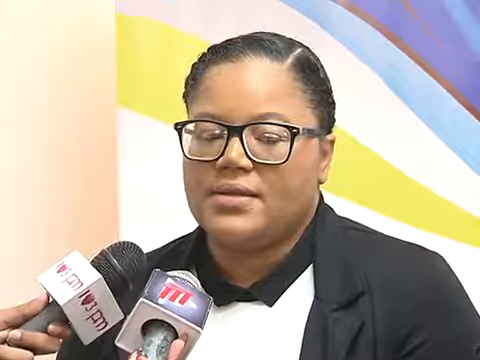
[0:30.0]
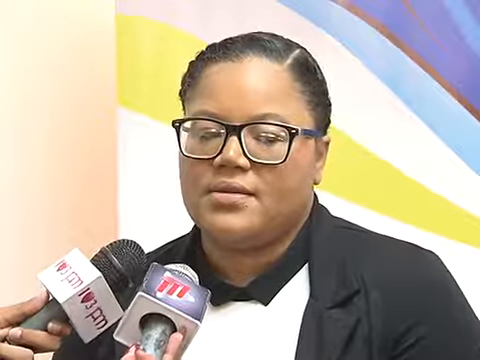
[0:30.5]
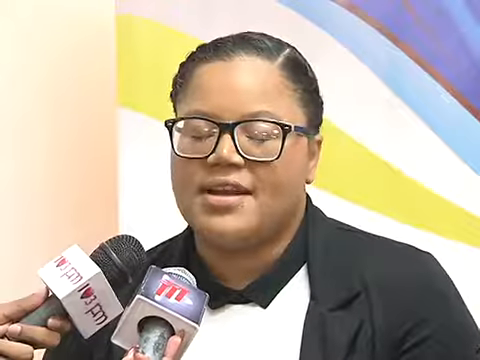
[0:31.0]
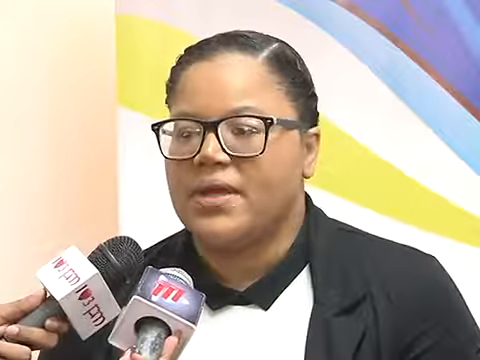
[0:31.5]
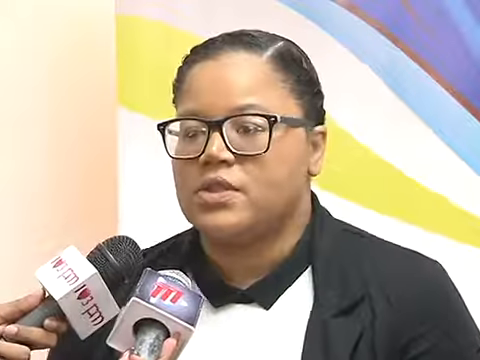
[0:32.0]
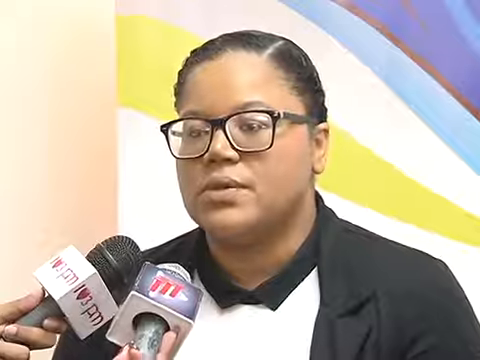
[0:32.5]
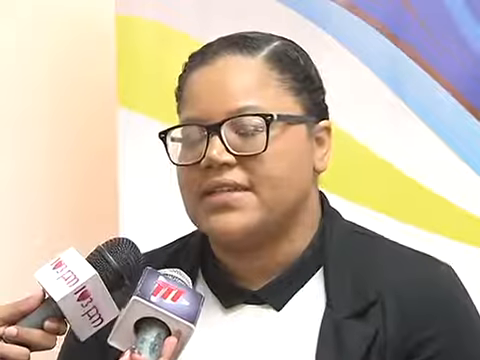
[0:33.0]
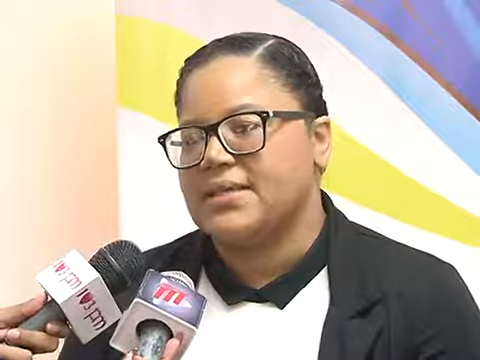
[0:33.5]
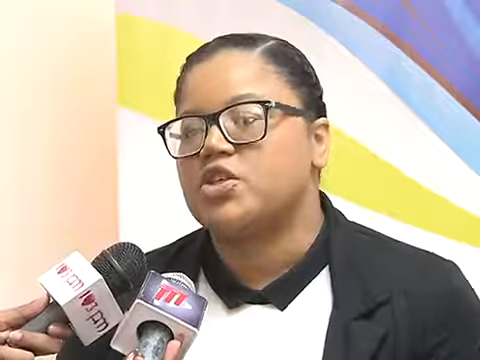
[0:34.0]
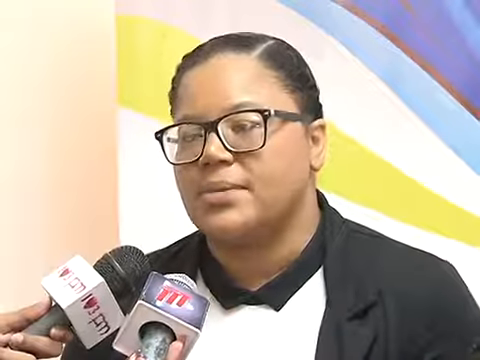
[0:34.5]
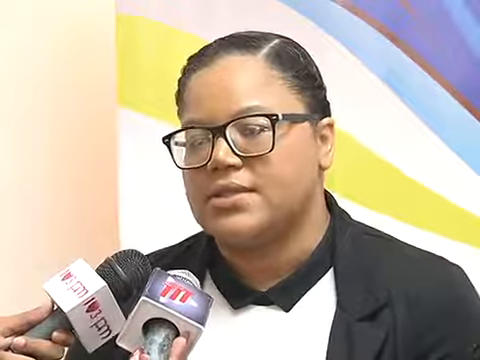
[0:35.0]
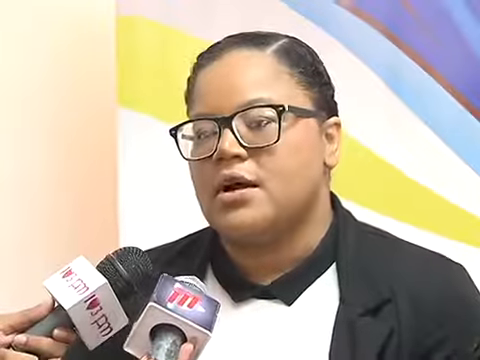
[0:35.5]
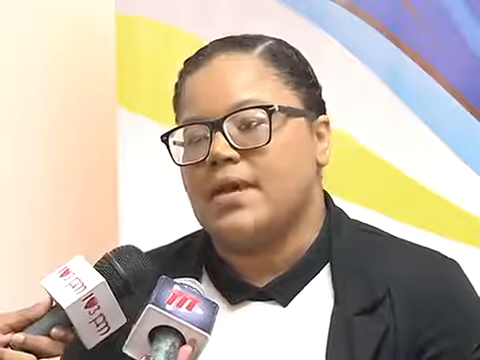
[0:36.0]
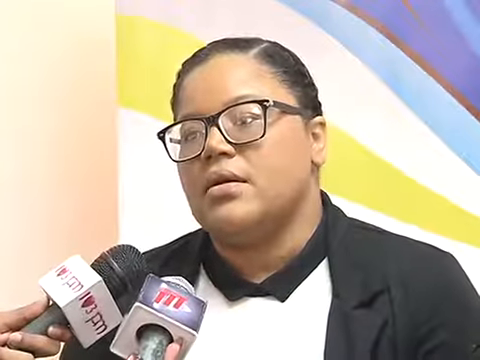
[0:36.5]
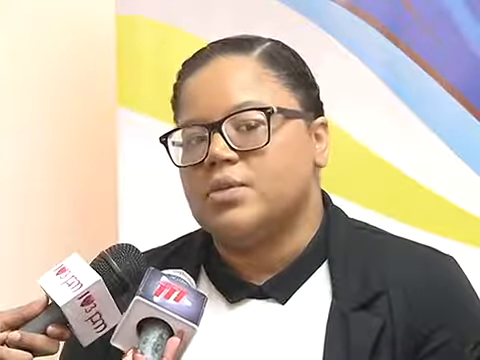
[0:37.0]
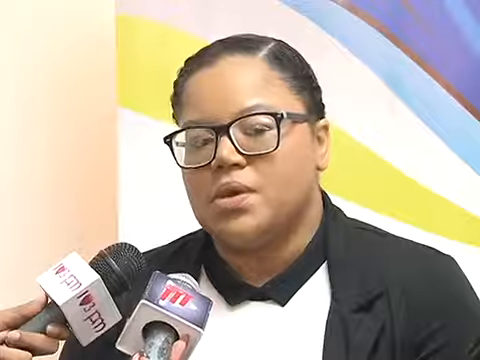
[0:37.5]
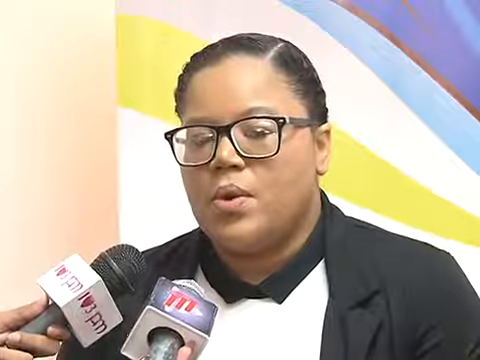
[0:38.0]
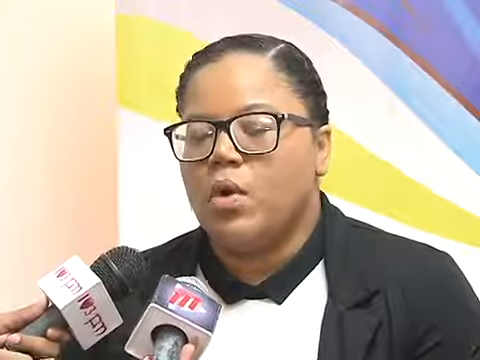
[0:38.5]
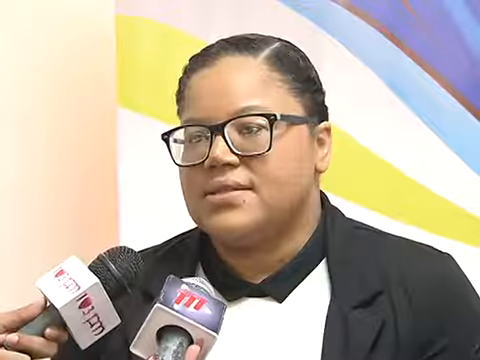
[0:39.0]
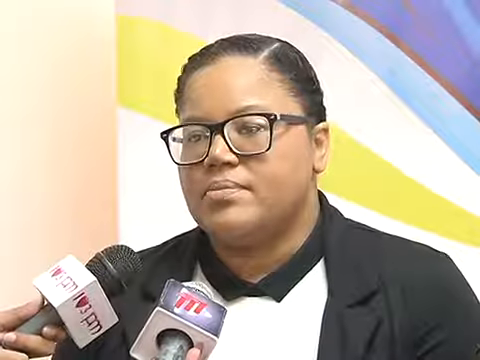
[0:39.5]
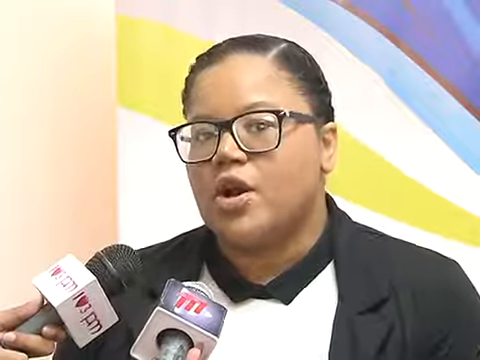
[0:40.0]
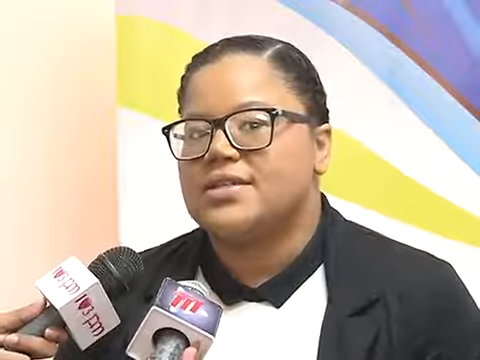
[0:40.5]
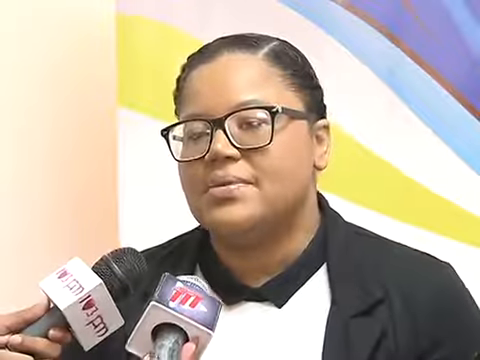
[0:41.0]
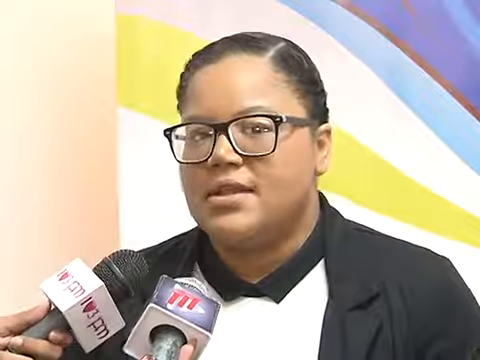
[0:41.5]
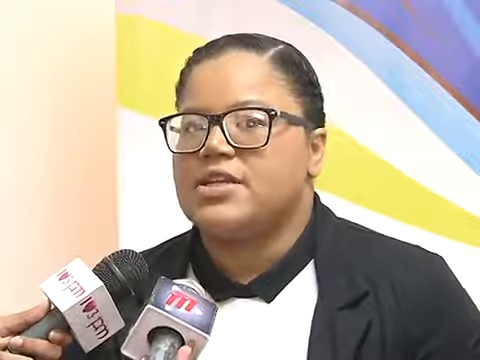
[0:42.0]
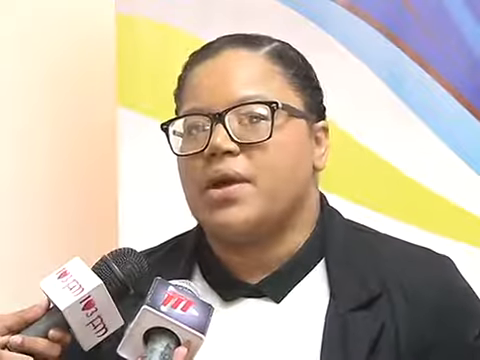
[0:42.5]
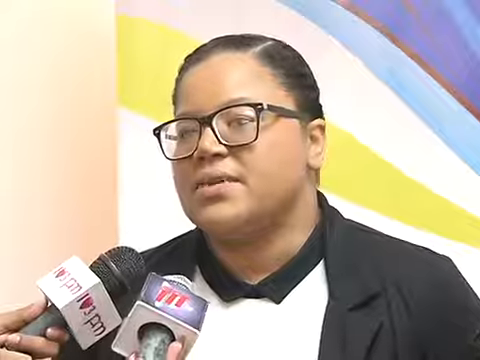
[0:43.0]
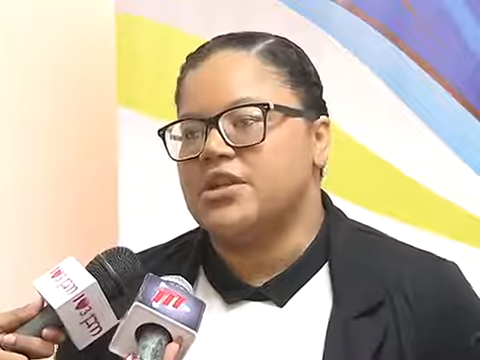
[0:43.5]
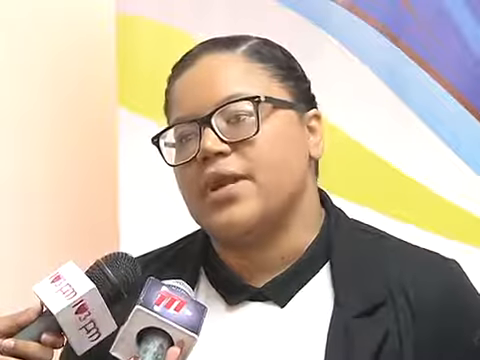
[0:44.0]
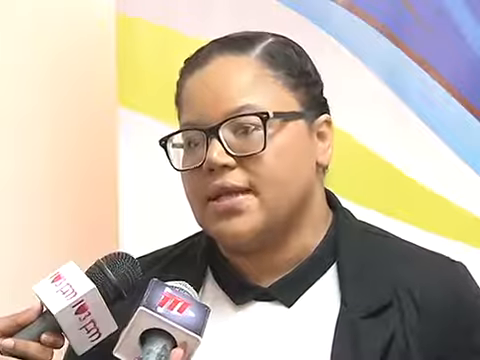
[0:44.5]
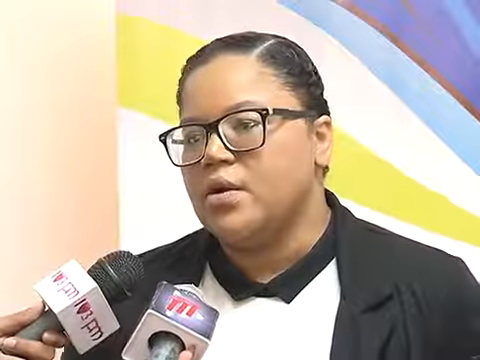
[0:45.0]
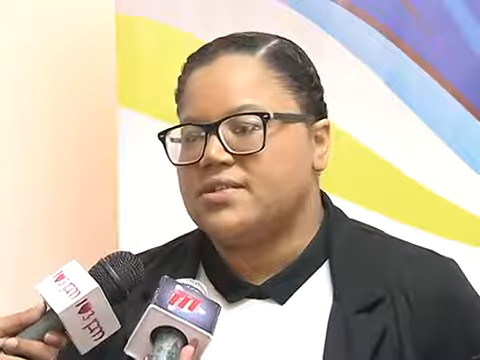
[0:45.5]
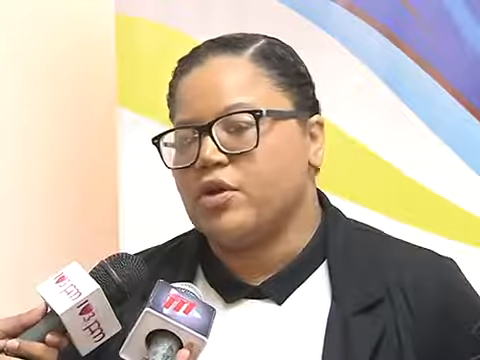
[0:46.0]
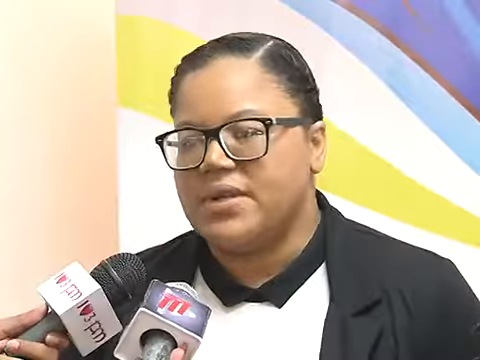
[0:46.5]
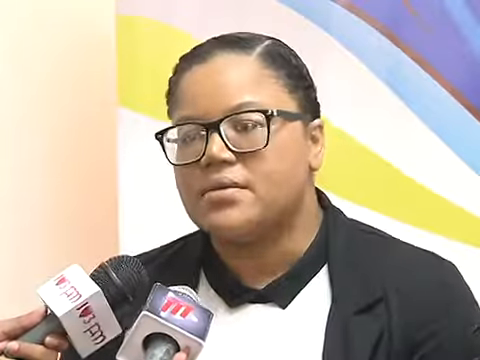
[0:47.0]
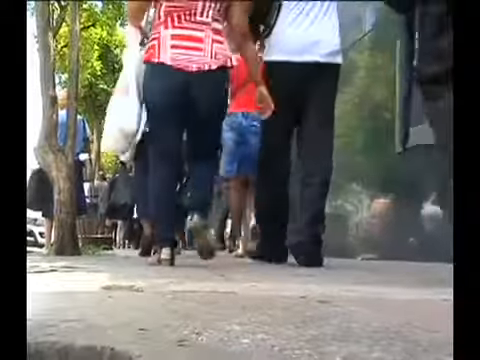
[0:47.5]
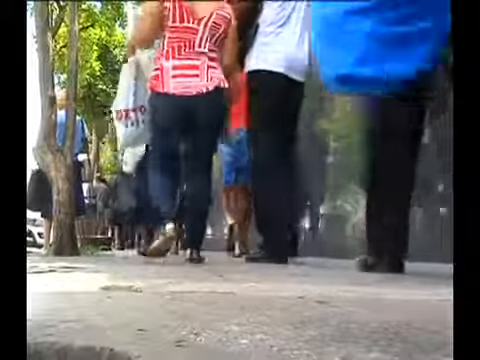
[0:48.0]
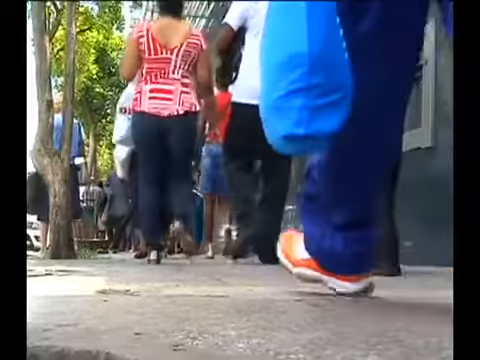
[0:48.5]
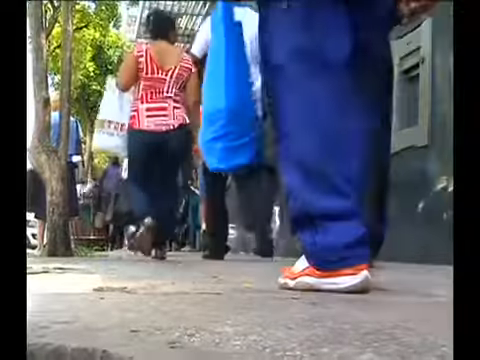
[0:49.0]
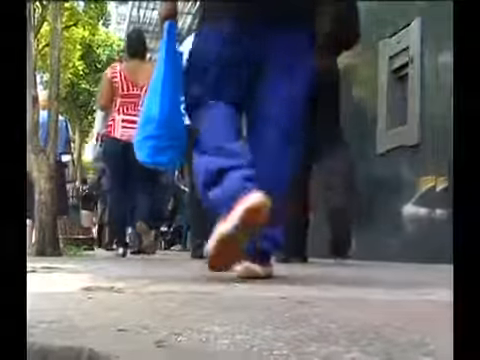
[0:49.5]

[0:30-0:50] A woman wearing a pair of glasses talks into two microphones held by people who cannot be seen; she seems to be speaking quite passionately about her subject. The scene then changes to a walkway pavement in a busy shopping area with people walking along it. A woman in a red and white t-shirt, black trousers and what look like silver shoes carries a shopping bag. There is a tree at the side of the walkway. A man wears black trousers and a white t-shirt with black sleeves, and the legs of another man, or possibly a woman, with a blue bag or top are in the shot. A person in blue trousers and red and white trainers walks with a blue shopping bag.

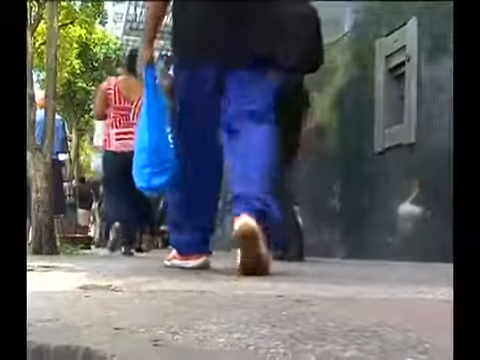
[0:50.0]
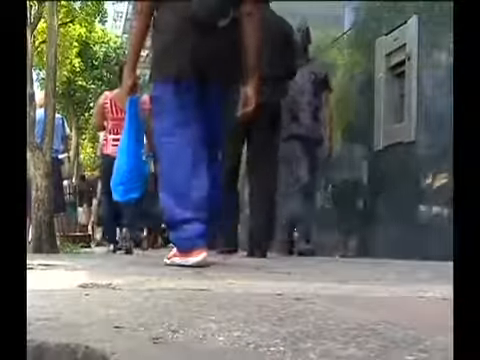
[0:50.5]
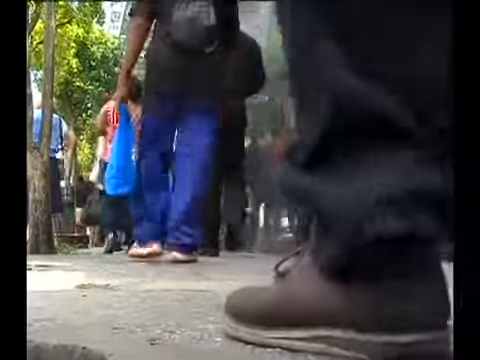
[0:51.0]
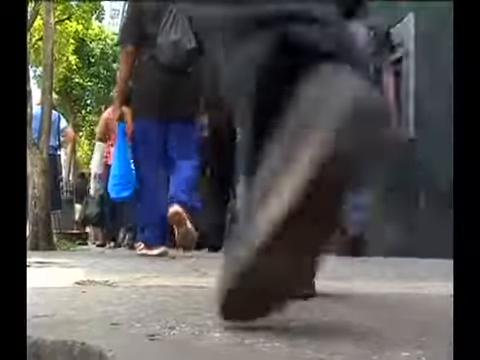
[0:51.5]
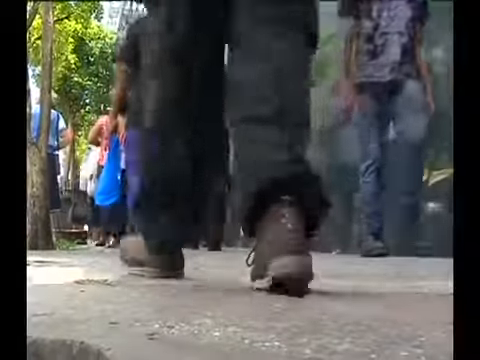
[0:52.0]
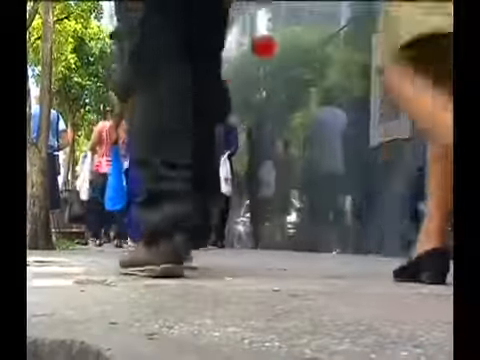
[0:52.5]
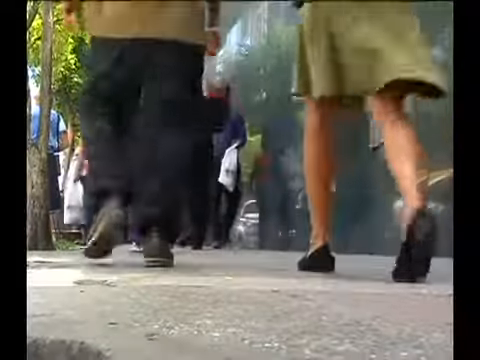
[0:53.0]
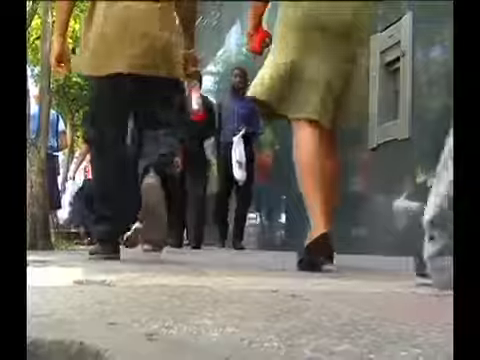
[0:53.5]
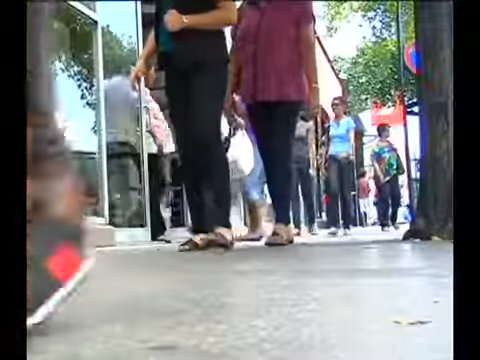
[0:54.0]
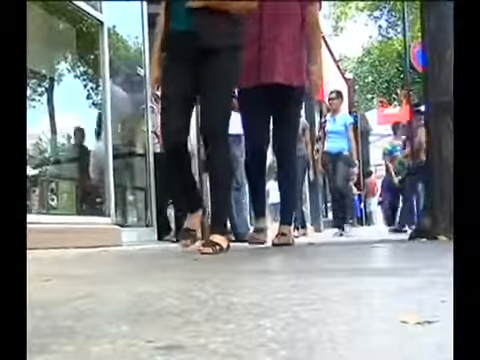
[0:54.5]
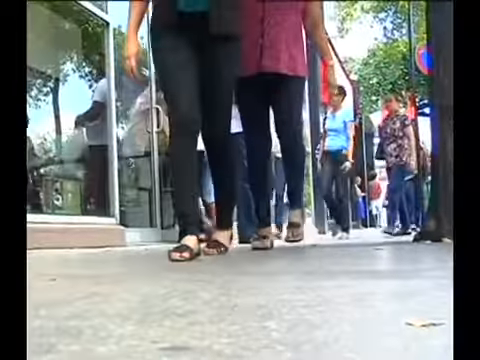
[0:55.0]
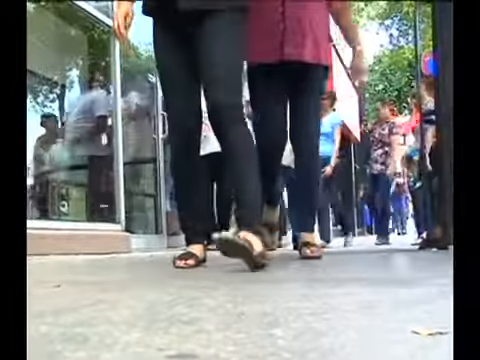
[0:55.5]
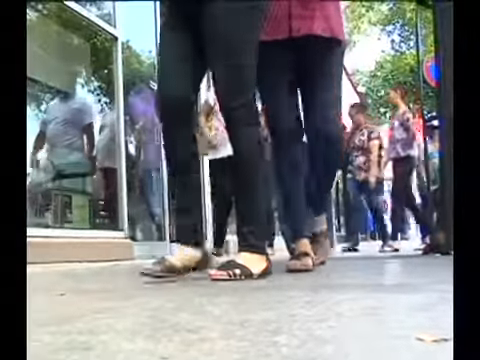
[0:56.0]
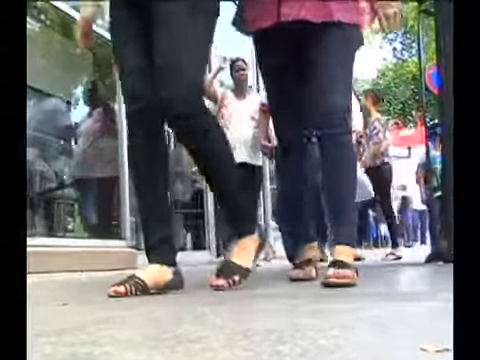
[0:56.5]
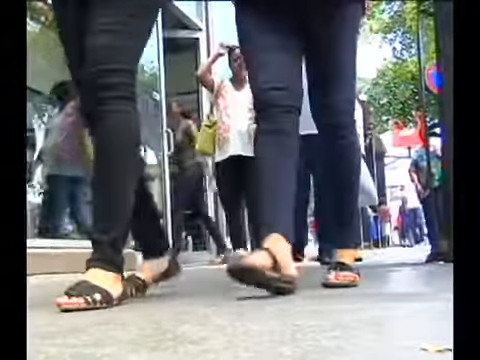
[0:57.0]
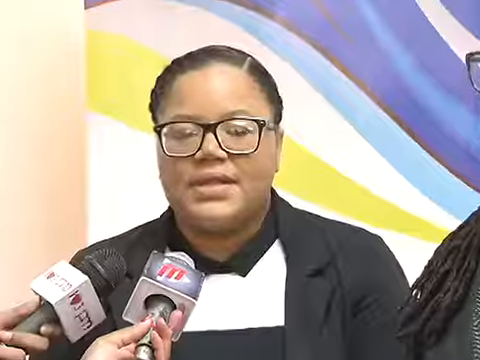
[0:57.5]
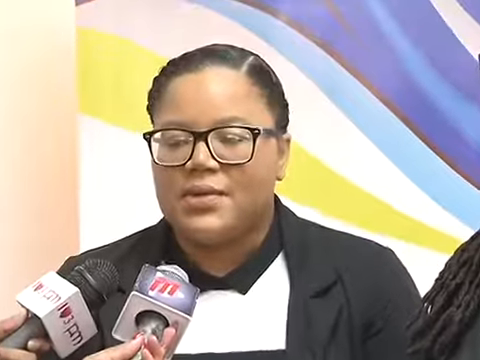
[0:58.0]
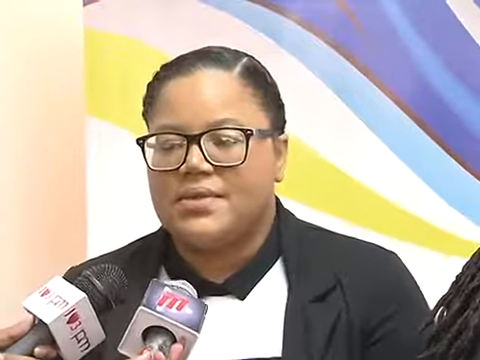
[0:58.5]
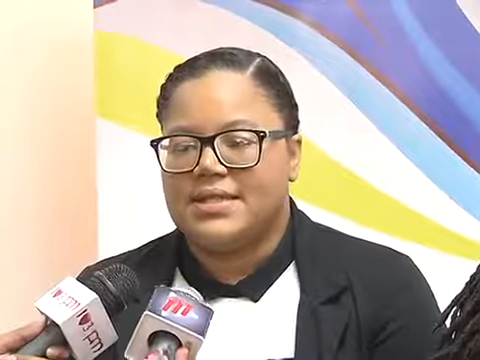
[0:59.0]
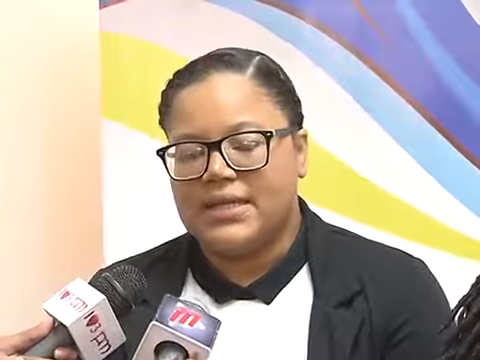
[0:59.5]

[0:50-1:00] A shopping area with a pavement or sidewalk is shown, with people carrying shopping bags and walking quite quickly in both directions. It appears to be a retail area in a built-up shopping district. People go into and come out of the shops, dressed casually in blue or black trousers with trainers or shoes, carrying shopping bags. There is a tree to the side. The area is very busy, with a significant number of people. The weather is fine and it looks warm, as people are not wearing jackets.